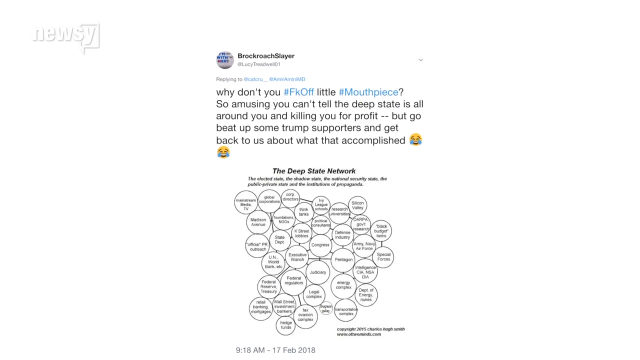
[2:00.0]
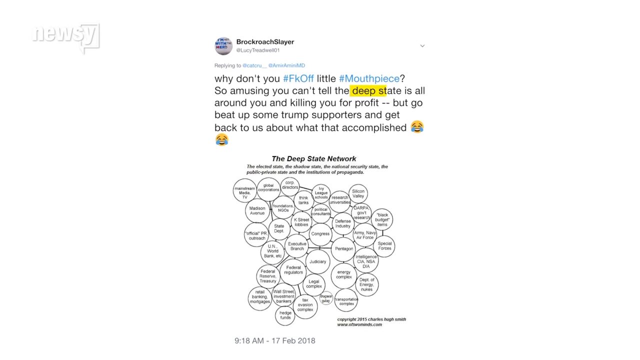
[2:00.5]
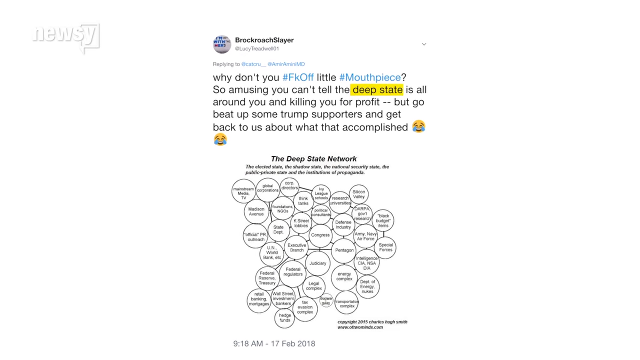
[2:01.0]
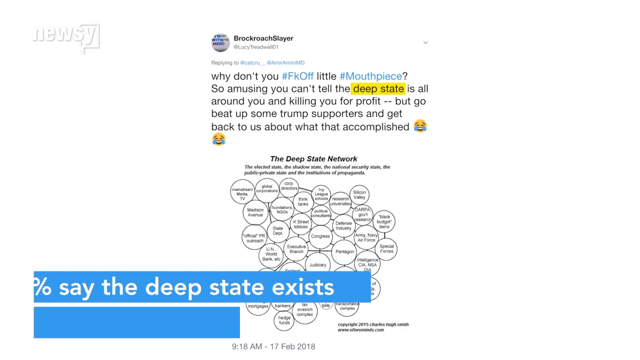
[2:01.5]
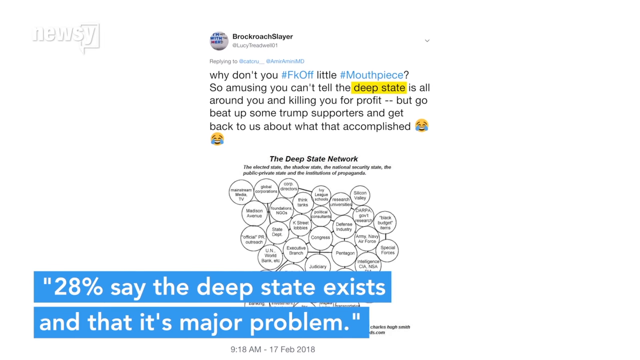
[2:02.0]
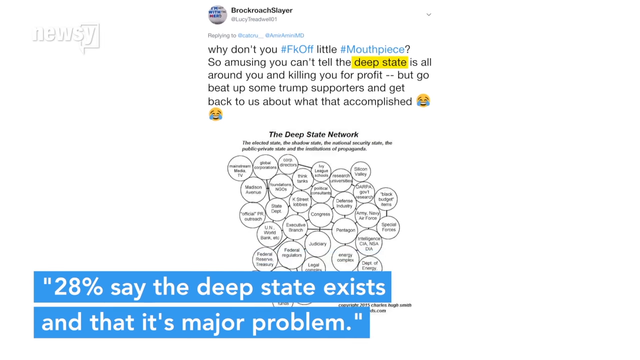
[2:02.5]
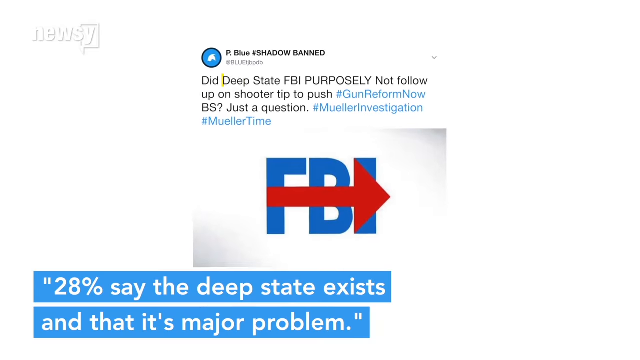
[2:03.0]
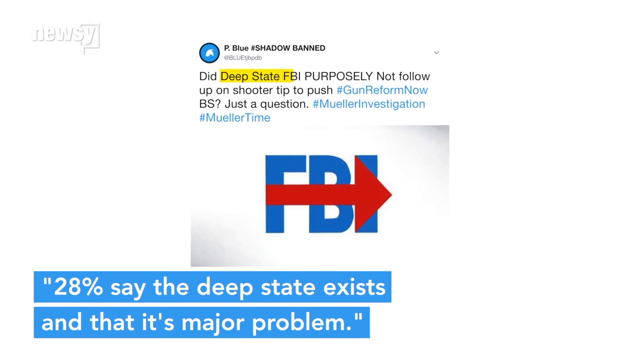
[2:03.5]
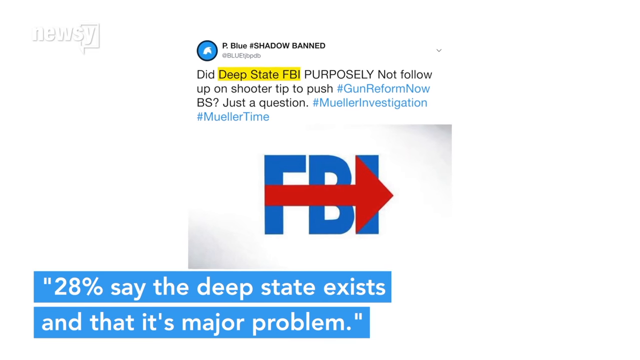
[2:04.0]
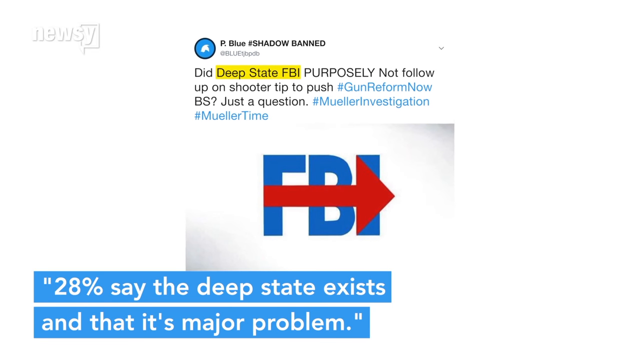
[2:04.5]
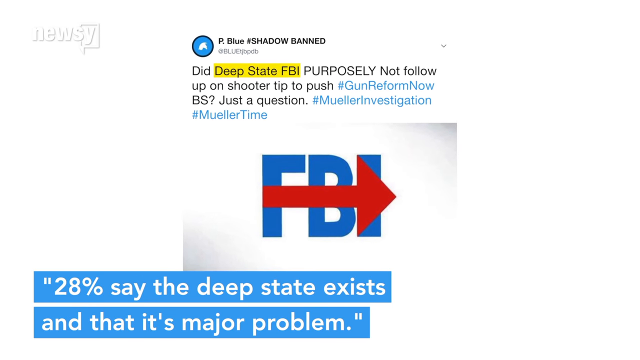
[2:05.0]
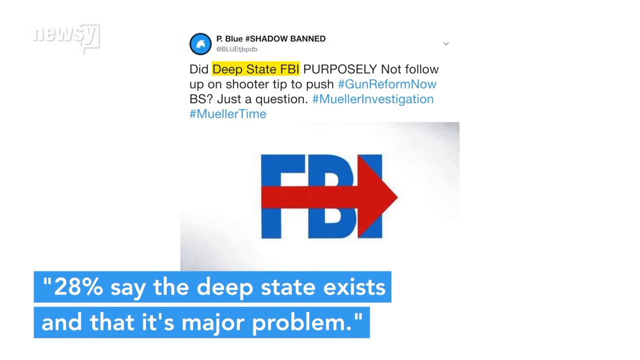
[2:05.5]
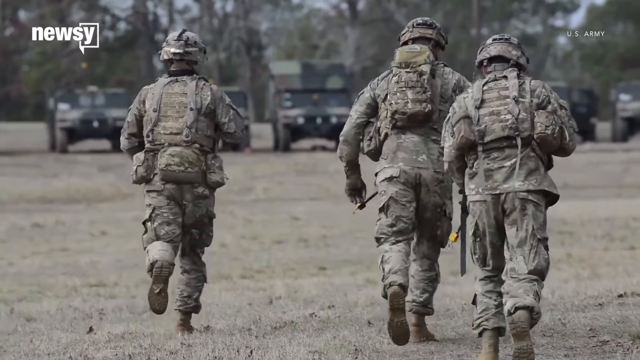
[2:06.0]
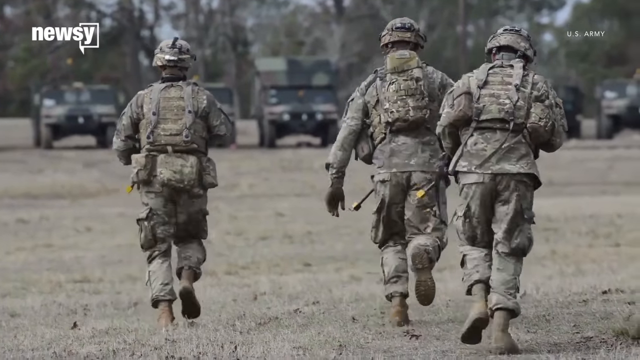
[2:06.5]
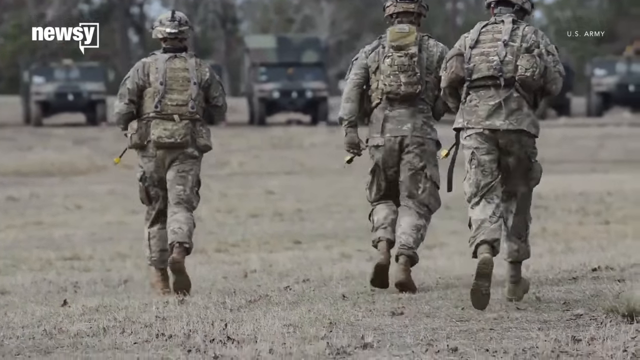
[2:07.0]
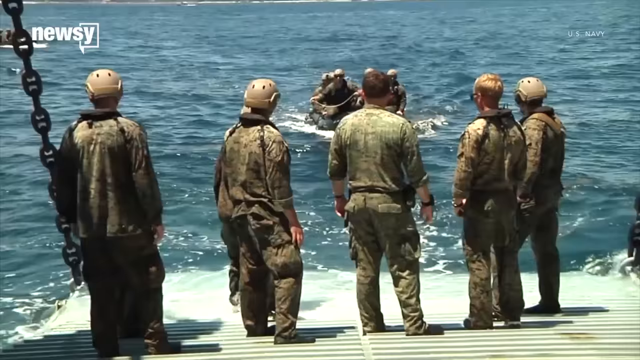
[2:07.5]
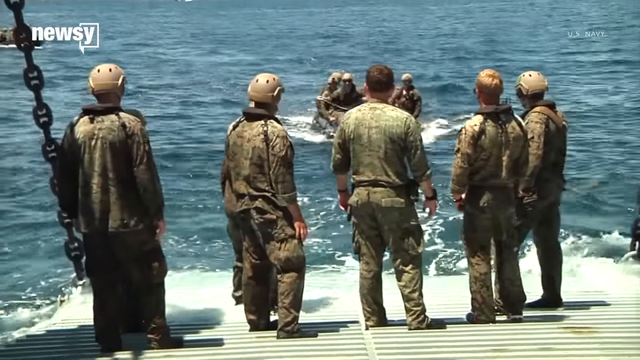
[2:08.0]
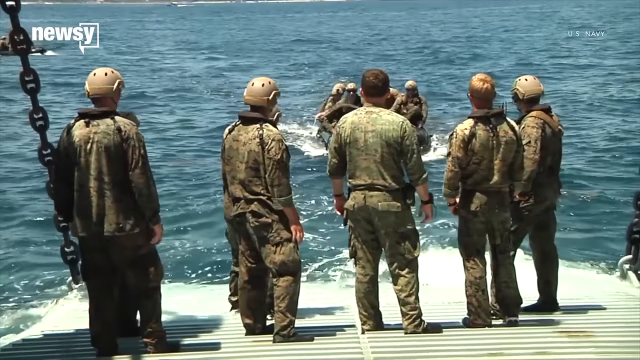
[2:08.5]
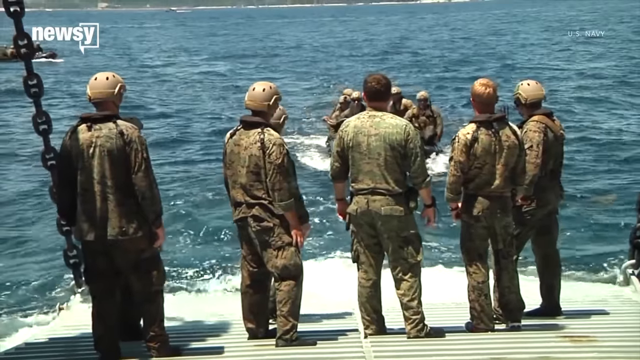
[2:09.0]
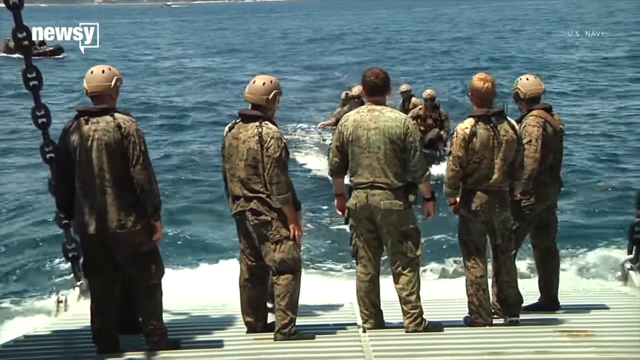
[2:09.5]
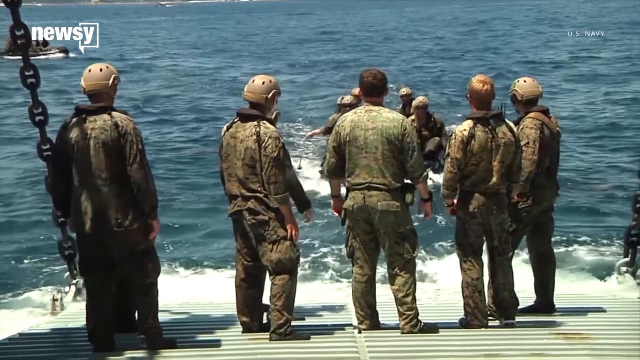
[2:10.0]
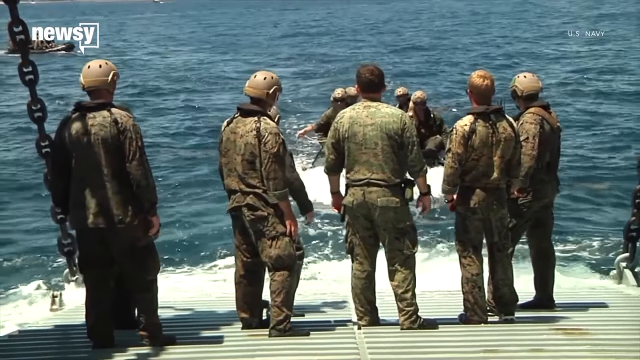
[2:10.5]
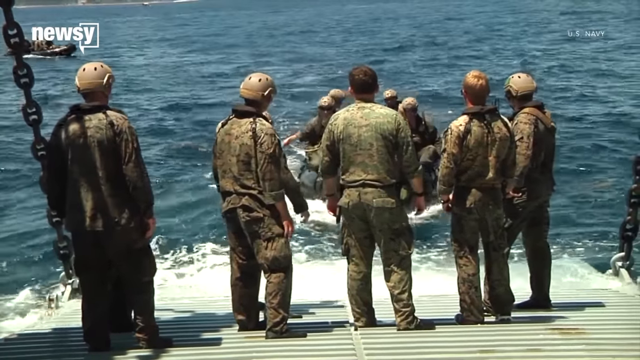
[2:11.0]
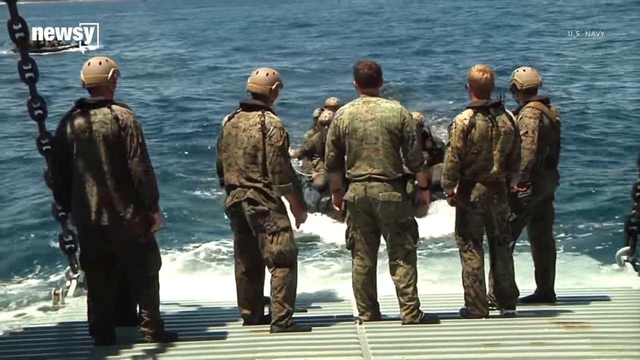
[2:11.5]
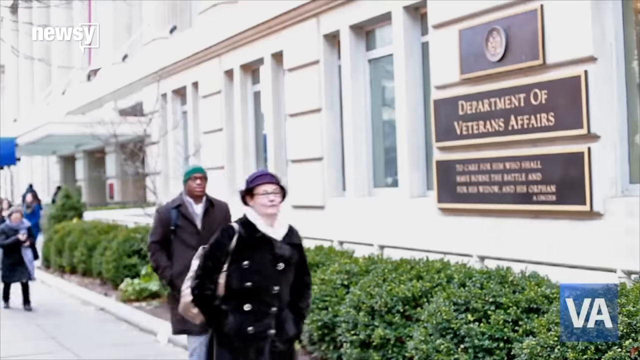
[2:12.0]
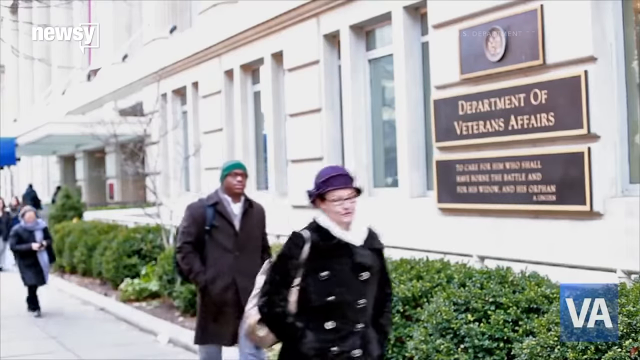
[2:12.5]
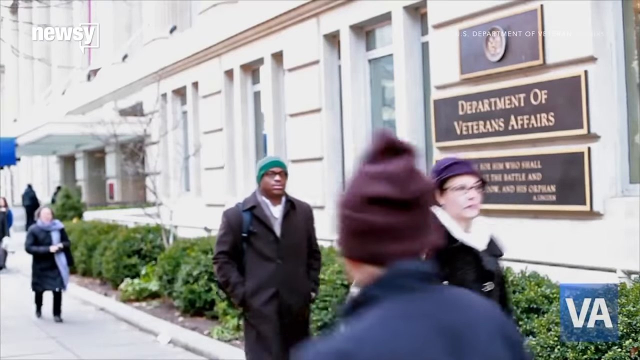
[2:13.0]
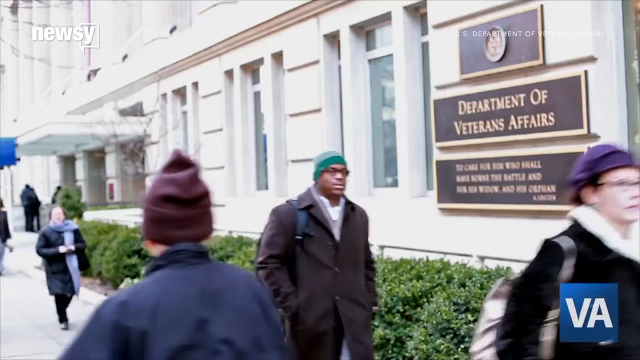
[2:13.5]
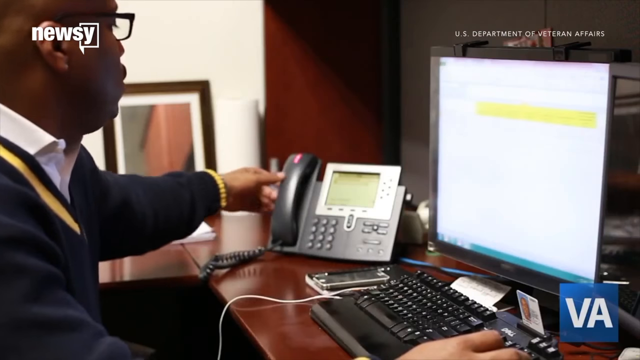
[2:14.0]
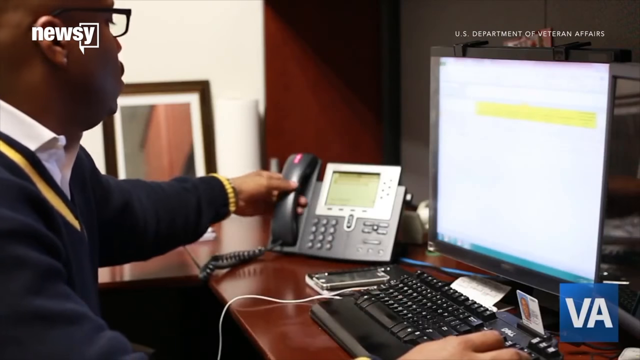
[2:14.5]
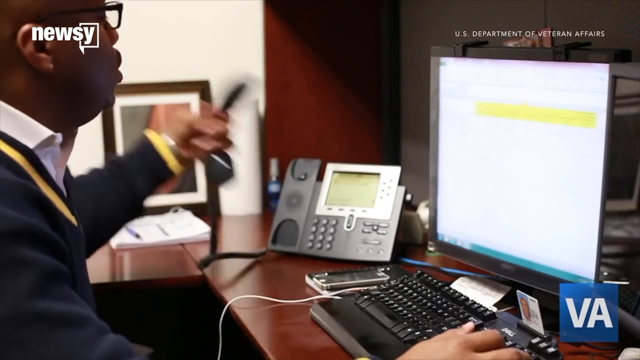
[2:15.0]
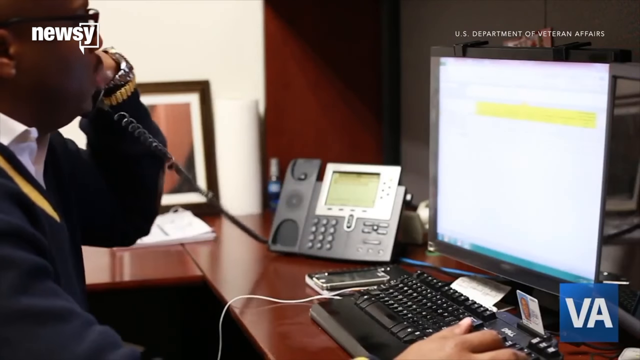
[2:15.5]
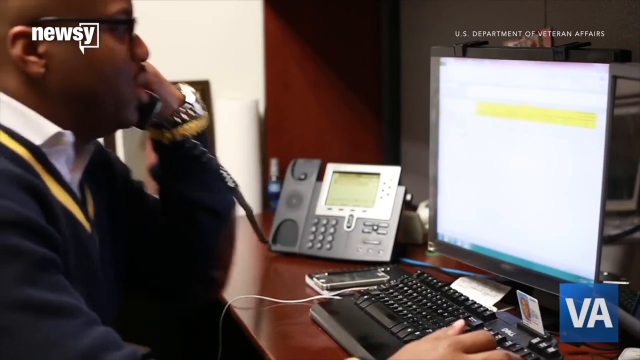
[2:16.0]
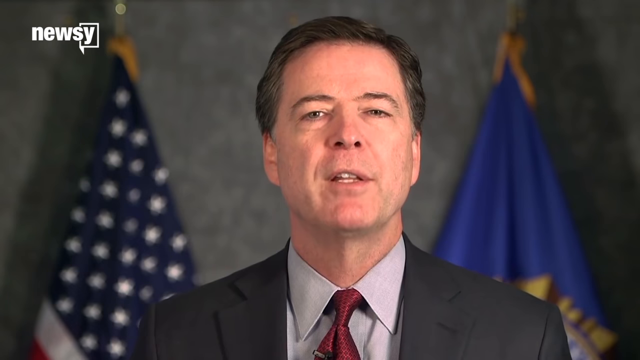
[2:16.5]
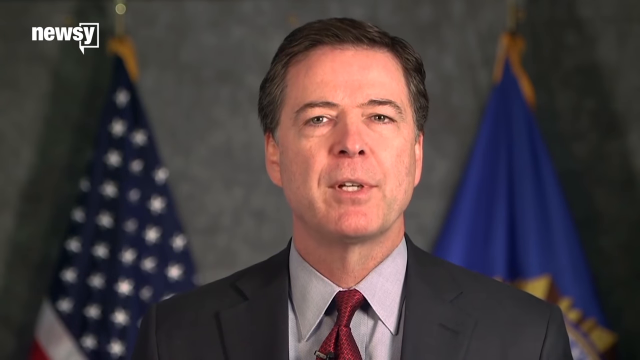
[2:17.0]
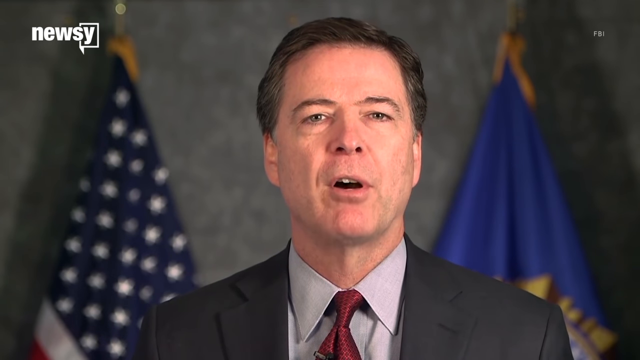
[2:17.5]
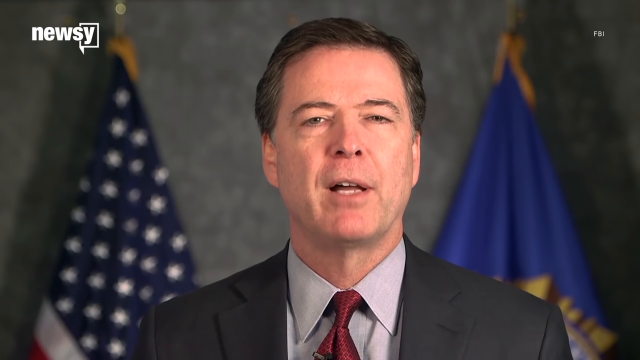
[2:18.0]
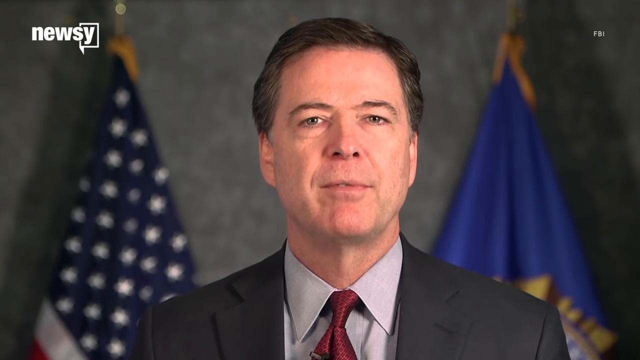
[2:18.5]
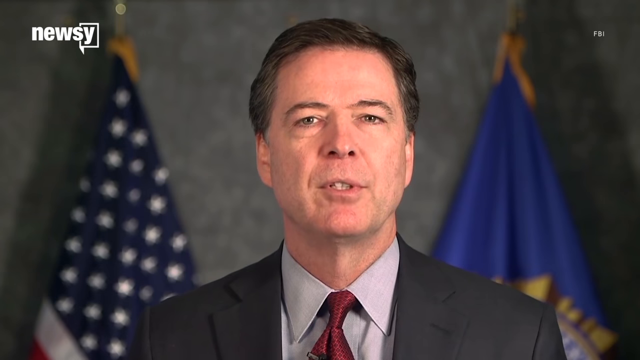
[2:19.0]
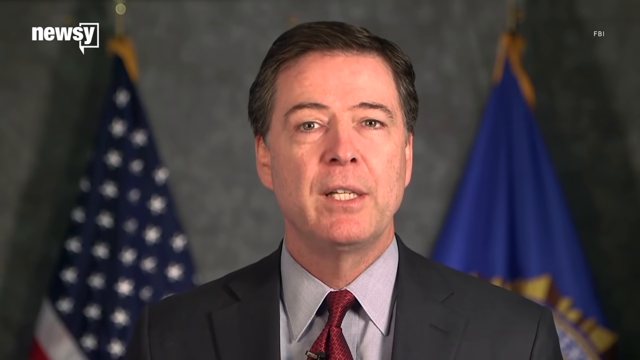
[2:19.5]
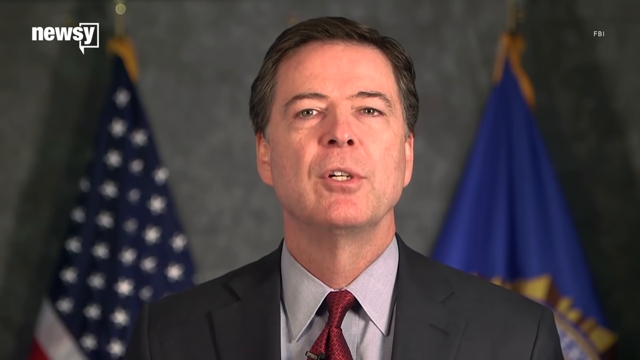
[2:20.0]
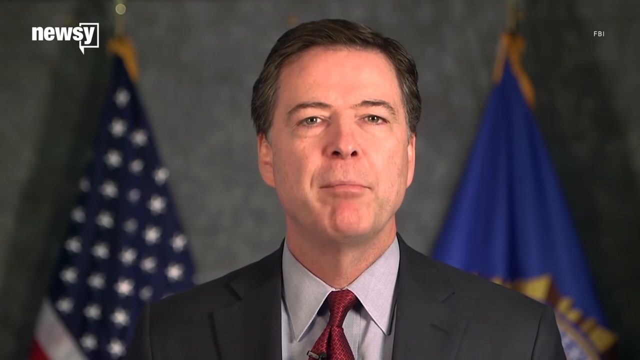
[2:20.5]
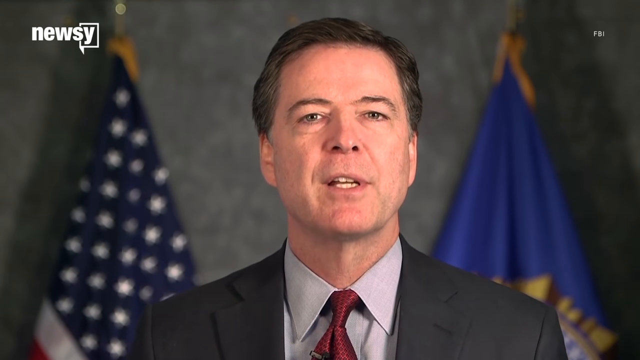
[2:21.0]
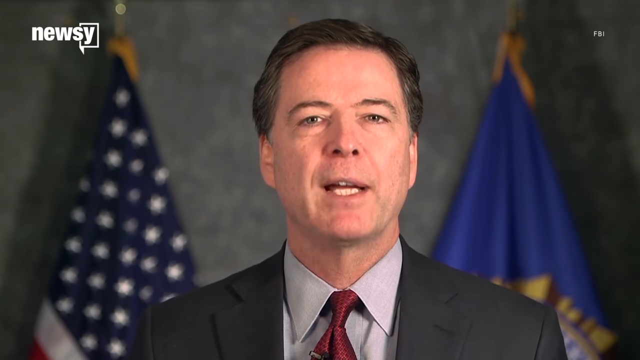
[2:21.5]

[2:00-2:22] A name appears with a quote from him reading "why don't you # FK off little # mouthpiece. So amusing. You can't tell the deep state is all around you and killing you for profit, but go beat up some Trump supporters and get back to us about what that accomplished." A diagram of the deep state follows, with lots of circles connected by lines; the names in it are too blurry to read, though one says "Congress," and "deep state" is highlighted in yellow. At the bottom it says "28% say the deep state exists and that it's a major problem." Another quote comes up about the FBI: "did deep state FBI purposely not follow up on shooter tip to push # gun reform," with a couple of other hashtags, and "FBI" appears with a red arrow on top of it. Military men run to their tanks, and some military men in the water on a boat go to other military men. A man sitting in front of a computer answers his phone. Finally, a Caucasian man in a suit and red tie stands in front of a few flags, talking.